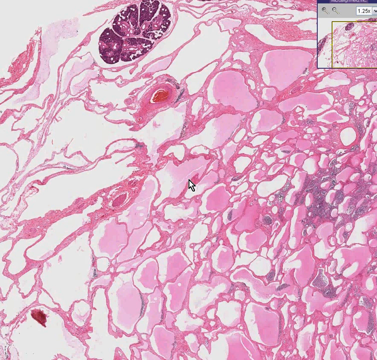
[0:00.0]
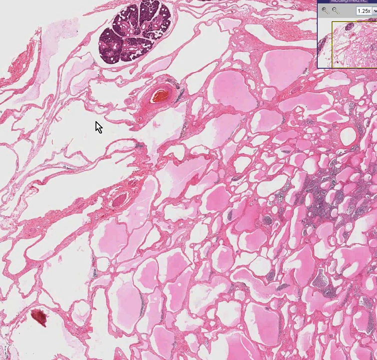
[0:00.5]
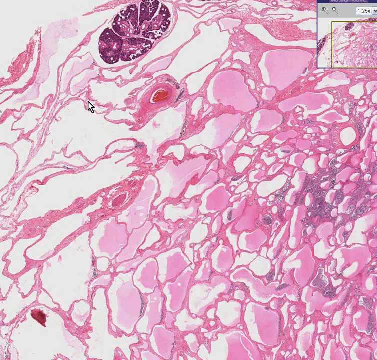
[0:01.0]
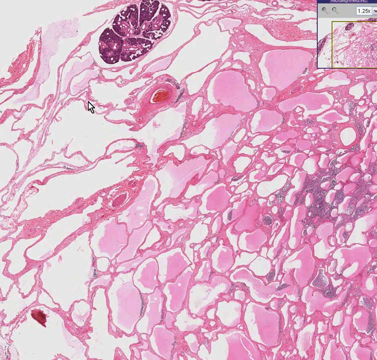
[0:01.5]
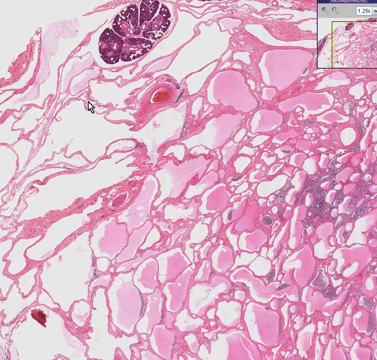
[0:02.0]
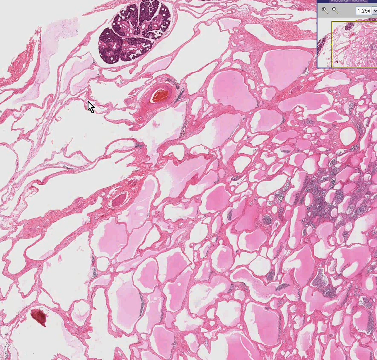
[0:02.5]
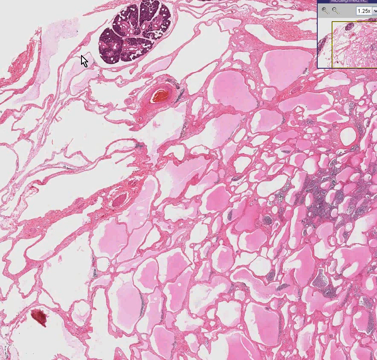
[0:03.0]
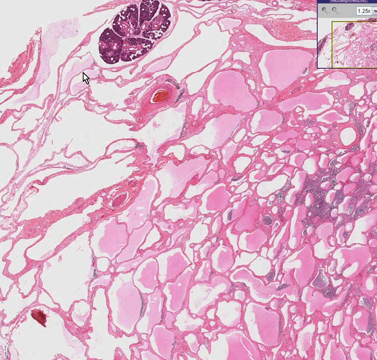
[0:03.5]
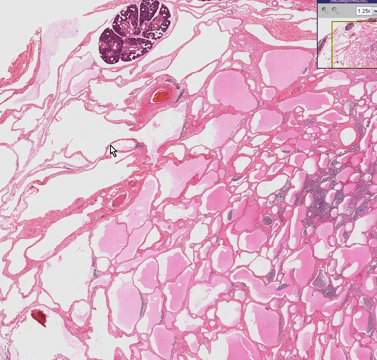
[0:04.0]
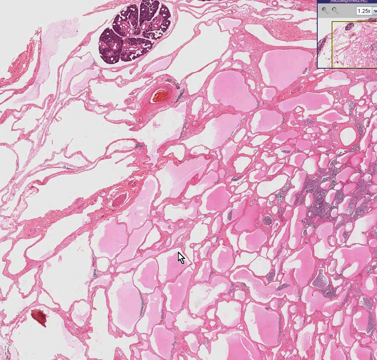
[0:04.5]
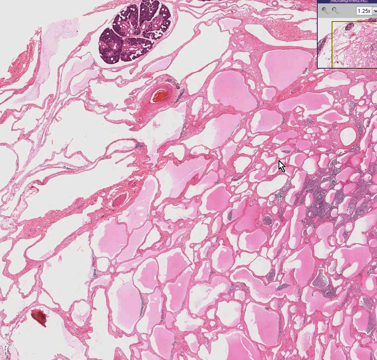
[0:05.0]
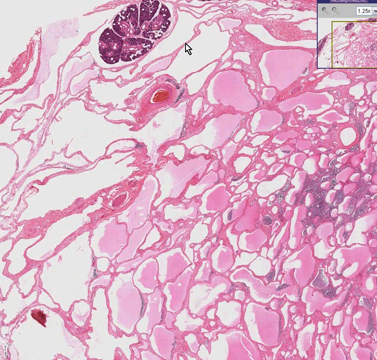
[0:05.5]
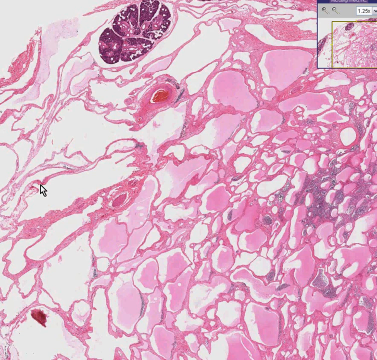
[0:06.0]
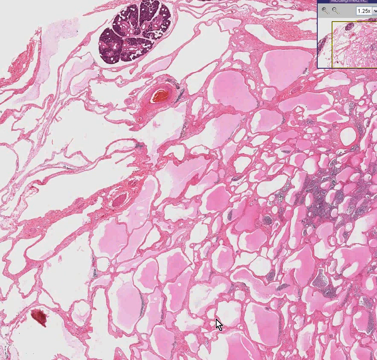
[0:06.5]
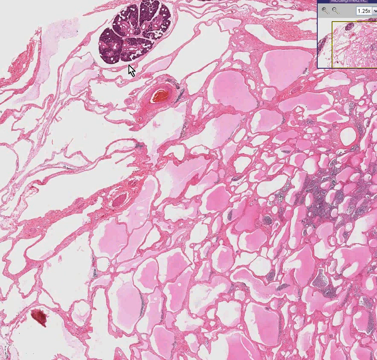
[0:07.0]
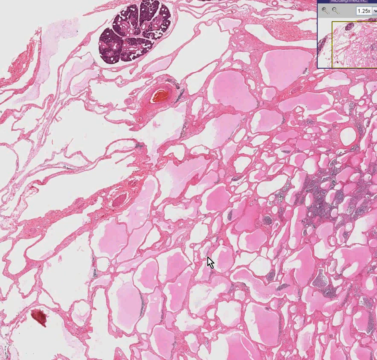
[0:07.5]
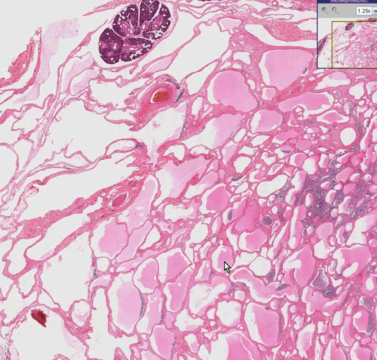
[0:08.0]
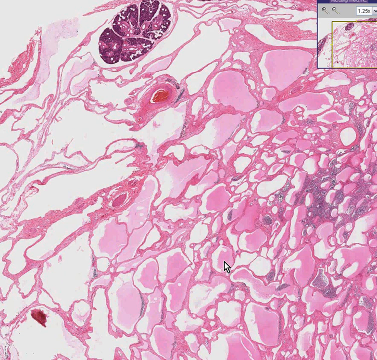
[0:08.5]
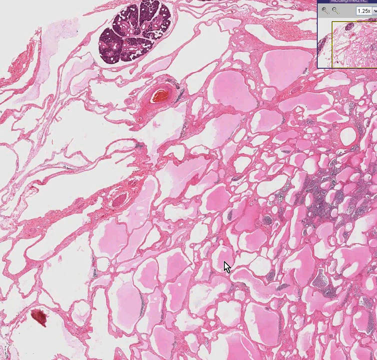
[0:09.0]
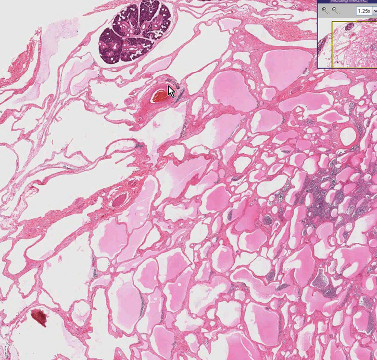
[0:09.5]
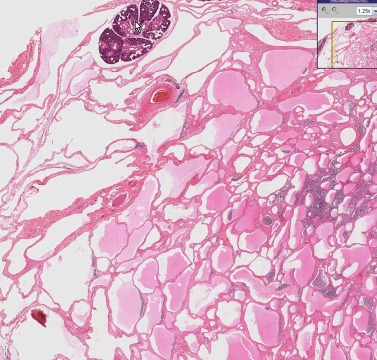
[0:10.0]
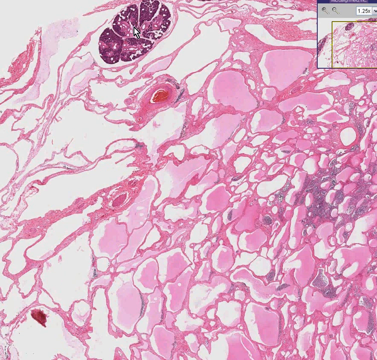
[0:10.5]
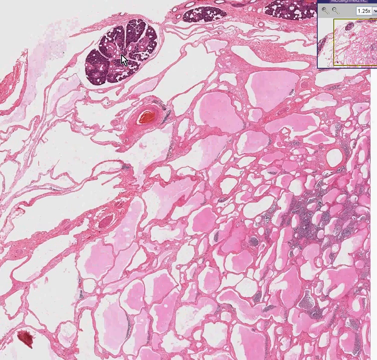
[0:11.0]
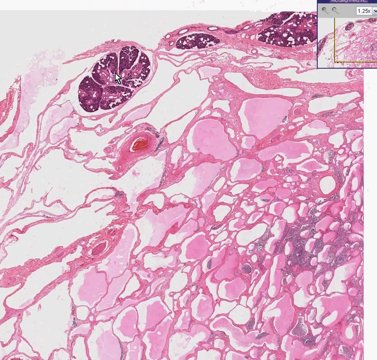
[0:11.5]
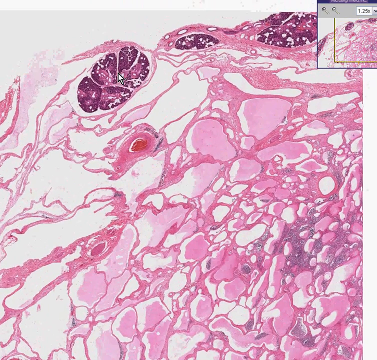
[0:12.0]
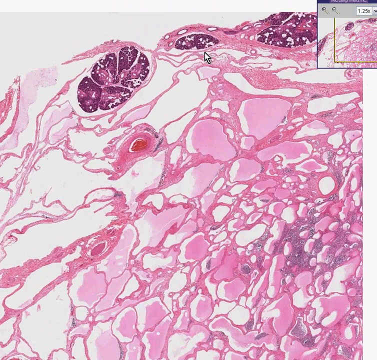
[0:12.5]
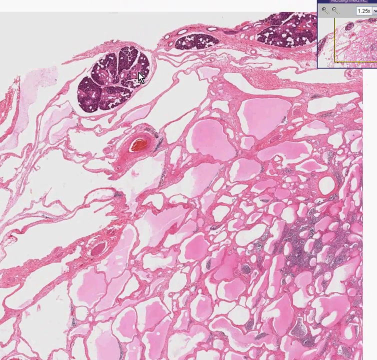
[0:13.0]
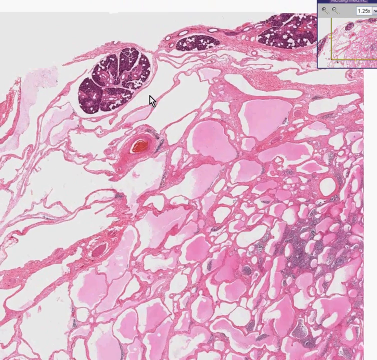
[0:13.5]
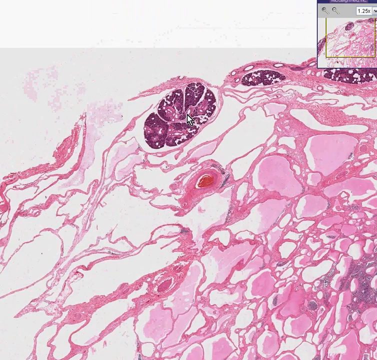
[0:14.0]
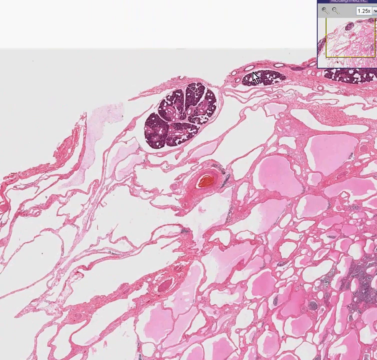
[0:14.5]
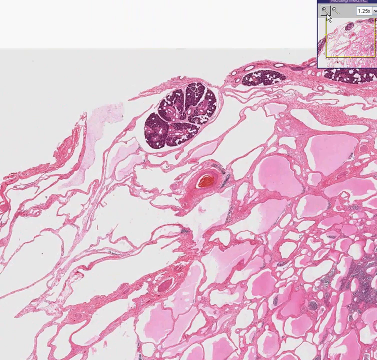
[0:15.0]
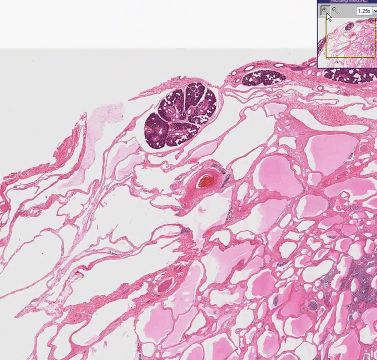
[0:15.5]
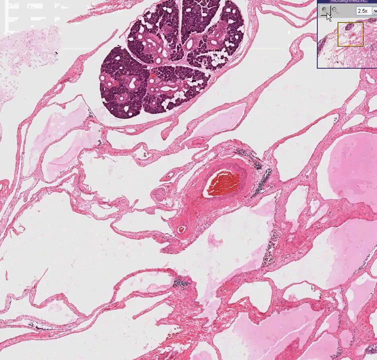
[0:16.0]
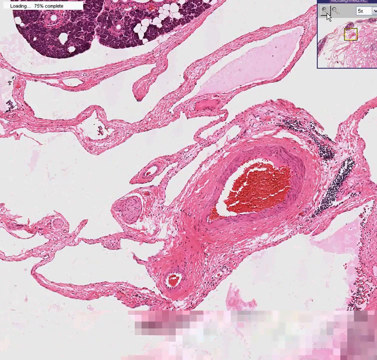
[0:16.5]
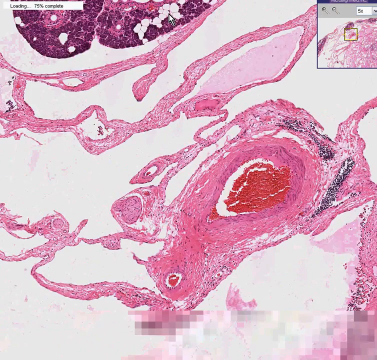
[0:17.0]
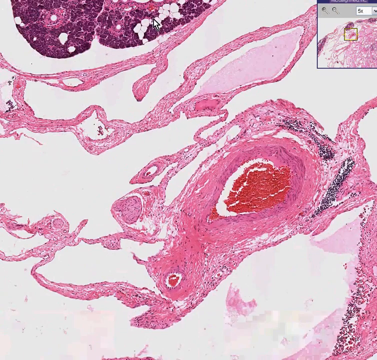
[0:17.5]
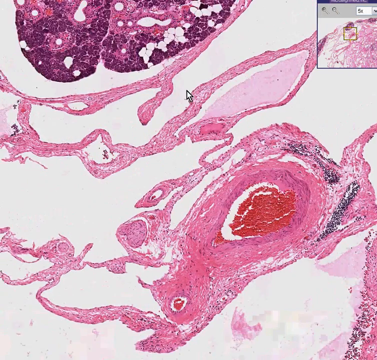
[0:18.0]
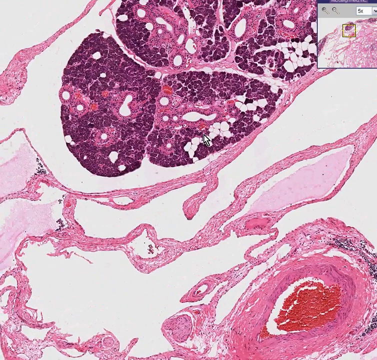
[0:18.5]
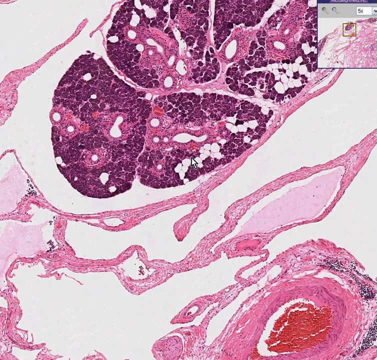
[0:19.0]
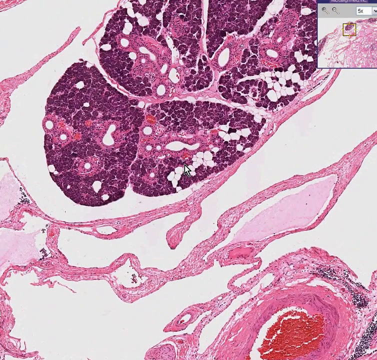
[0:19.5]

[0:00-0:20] A mostly white and pink image fills the view, apparently a digital image seen at a microscopic or cellular level. At the top of the screen is a computer window that lets the user select a level of zoom. A mouse pointer moves across the screen. Nothing in the image itself moves. The user drags the picture up and down, left and right, then goes to the zoom controls and zooms in, then returns to moving the image freely.